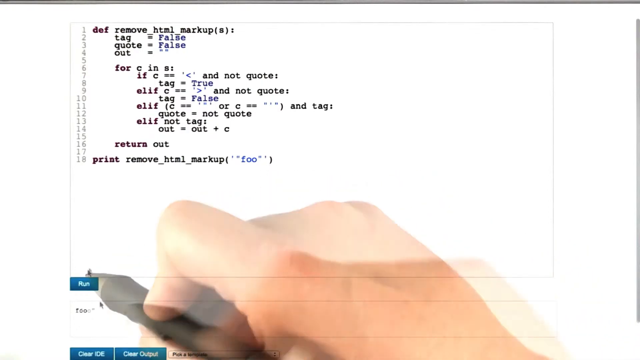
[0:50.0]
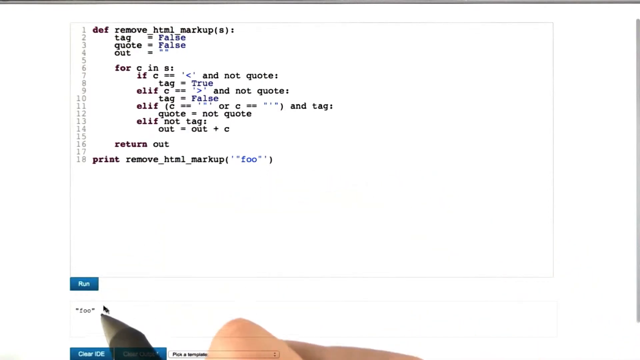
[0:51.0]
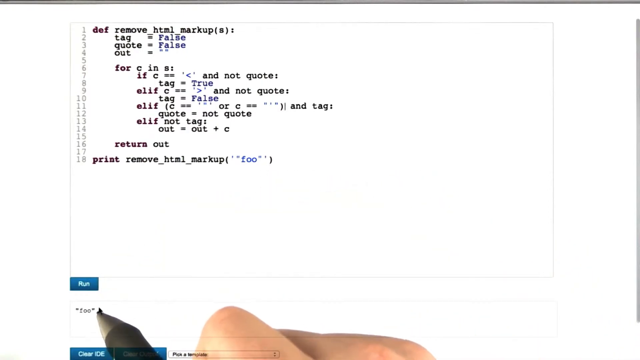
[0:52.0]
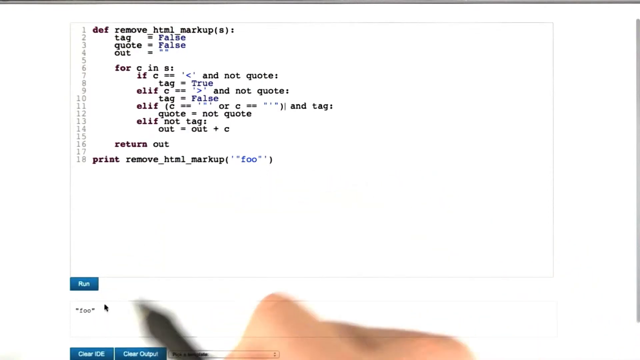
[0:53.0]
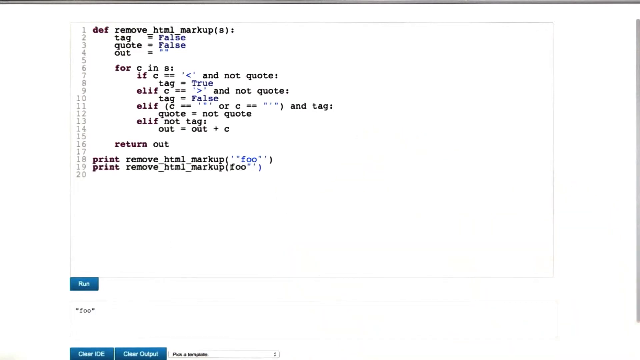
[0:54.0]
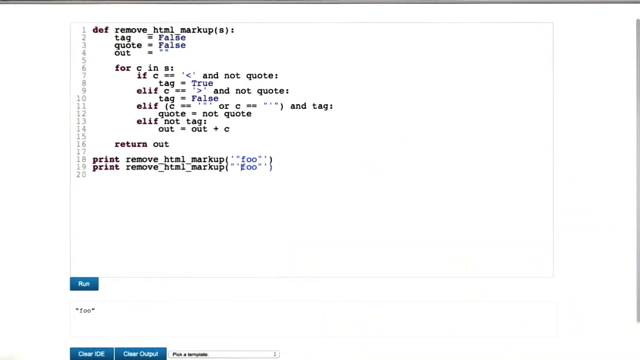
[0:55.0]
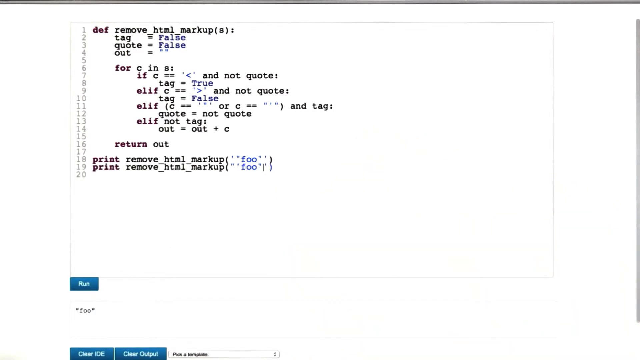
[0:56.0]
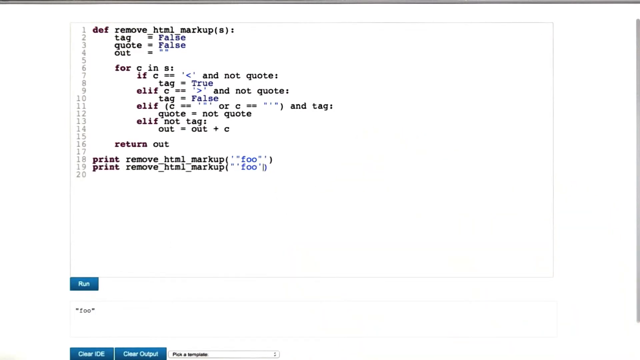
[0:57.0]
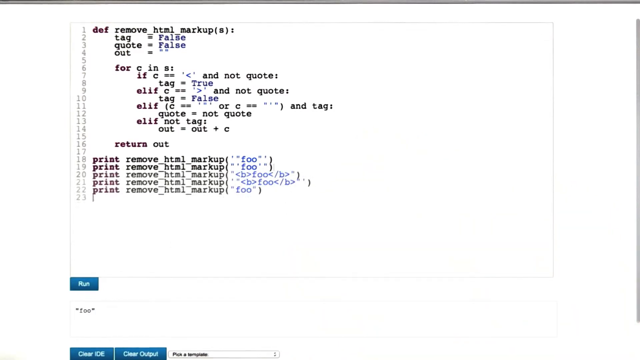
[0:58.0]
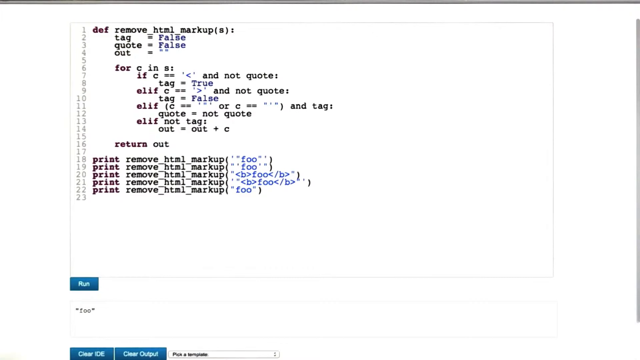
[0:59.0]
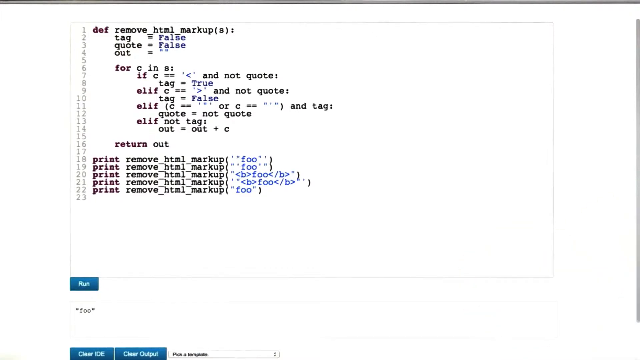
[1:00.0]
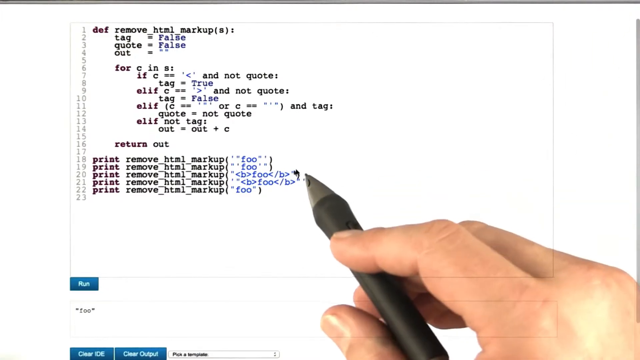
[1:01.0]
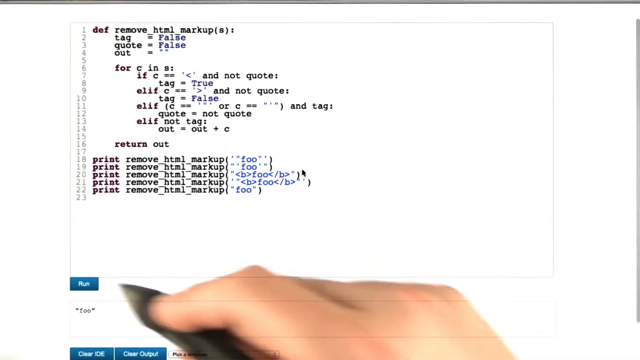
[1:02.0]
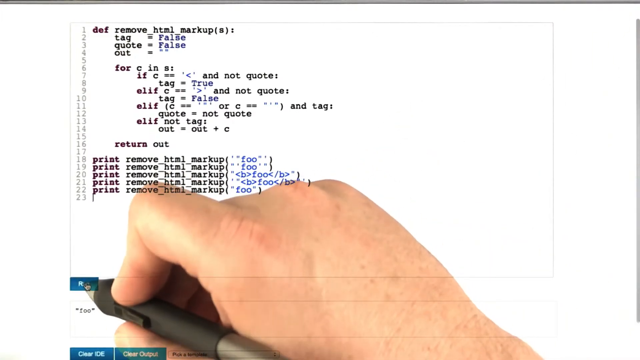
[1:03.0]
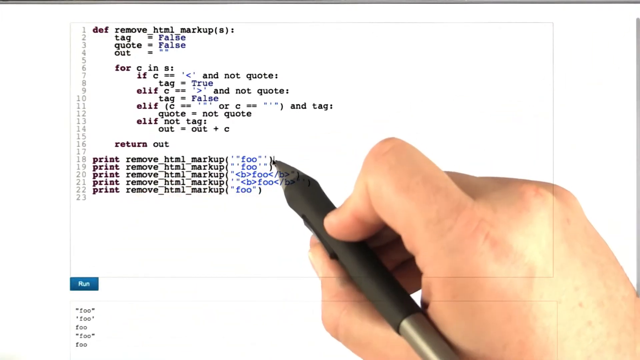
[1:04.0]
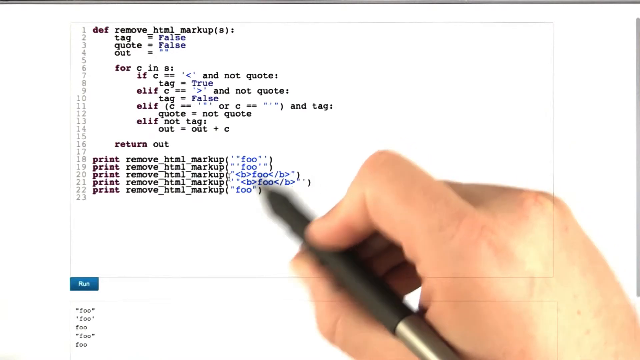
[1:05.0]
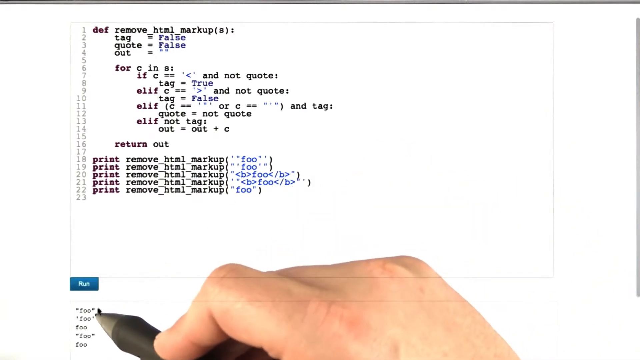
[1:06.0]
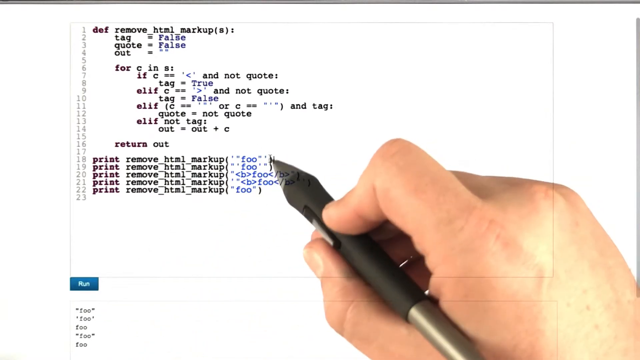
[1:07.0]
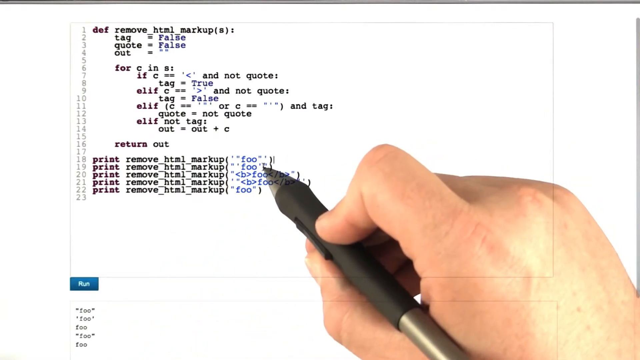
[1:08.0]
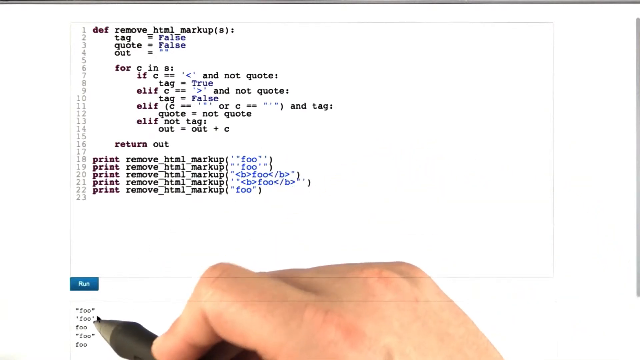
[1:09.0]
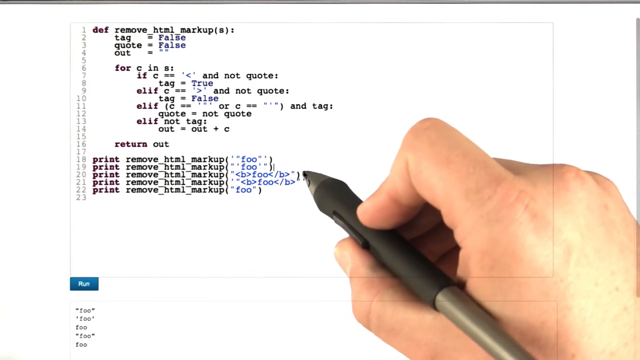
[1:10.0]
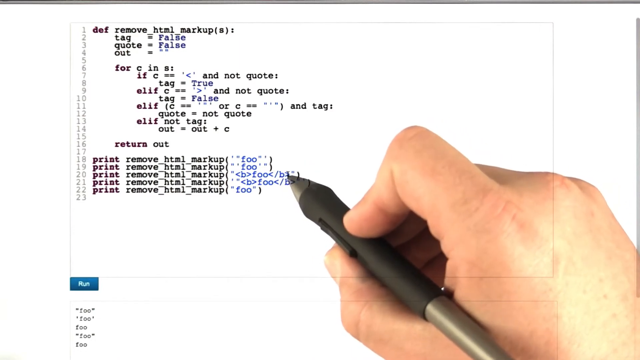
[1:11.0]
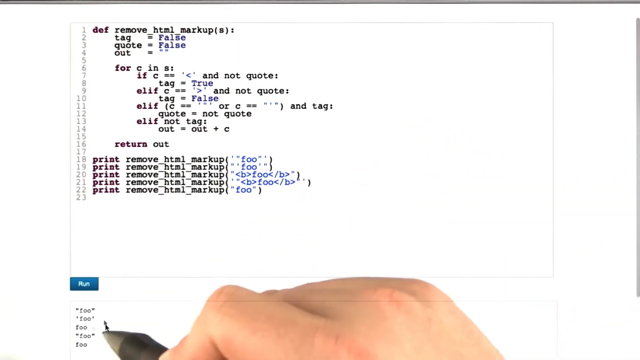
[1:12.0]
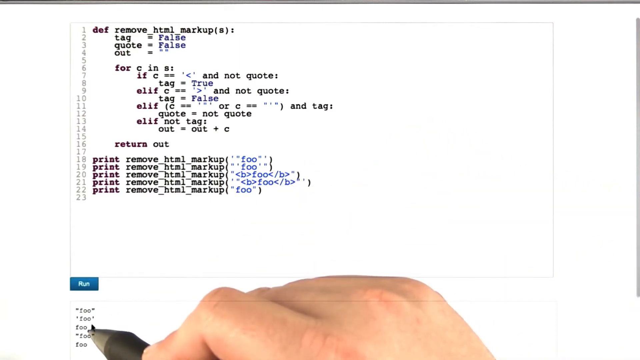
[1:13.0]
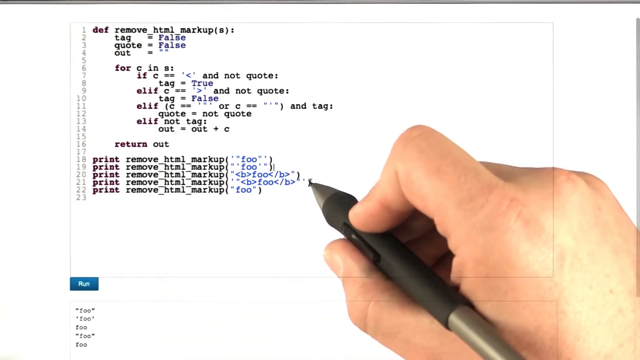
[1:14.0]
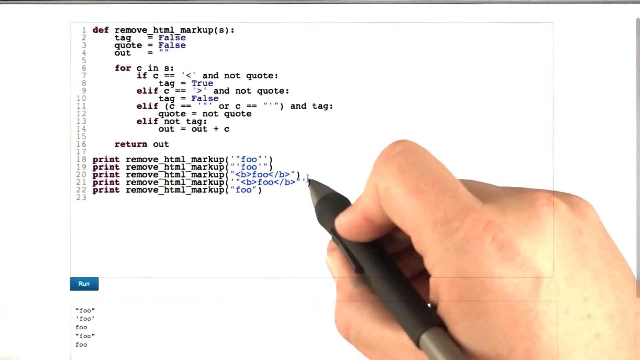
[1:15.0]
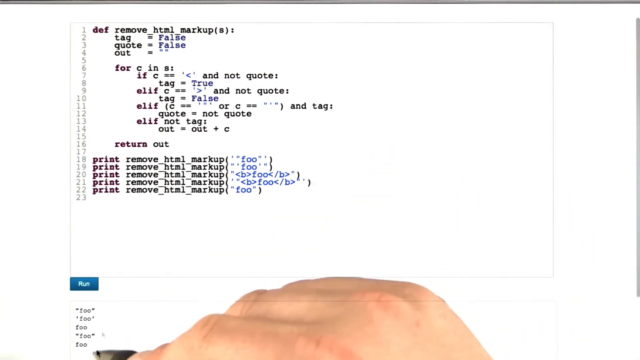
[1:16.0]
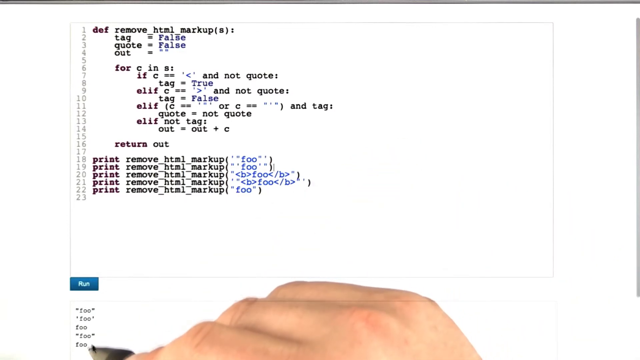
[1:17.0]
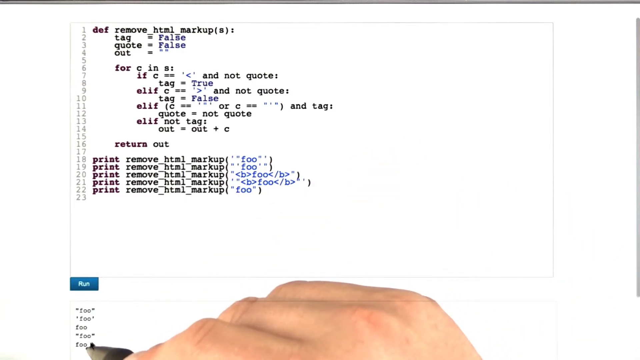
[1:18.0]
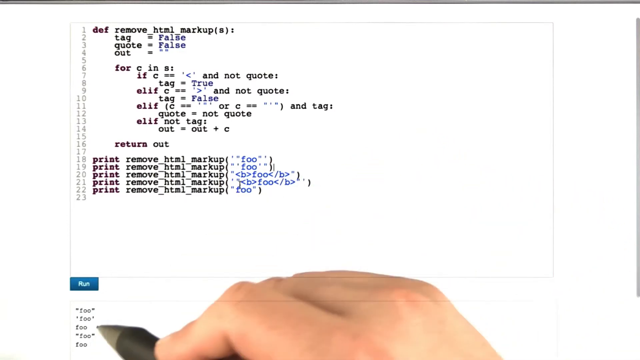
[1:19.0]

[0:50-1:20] The pen is near the bottom left, under the run button, pointing for a while at text there that is too small to read. It then moves back up to about the seventh row down, where it says "and tag", and points at it. The thumb is a little loose off the pen now, with its fingertip hanging loose, and a little of the other fingers shows coming around the pen on the bottom, while the pointer finger stays on top. More lines appear: there is something on line 18, then 19, with the number 20 below. Information on line 19 is changed, then information is added on line 20. Lines 21 and 22 appear with more information printed out, with the number 23 below. Some information on line 20 is changed, and the pen goes down toward the run button again and then back up. The thumb is tighter on the side now, so the fingertips of the other fingers can't really be seen; the finger joint is still bent, pointing down sharply, with the back between the knuckle and the first joint visible. The pen goes down to the bottom, where there is now more small print under run, about five lines of it, and points around there. It then goes back up to line 20, pointing at information there, points down to line 22, back down to the information under run, back up to line 21, and back at the information under run, kind of going back and forth.